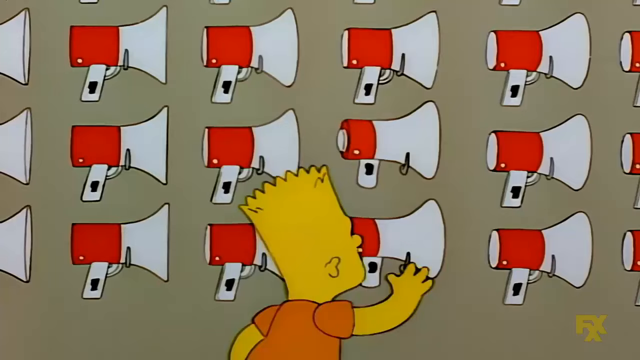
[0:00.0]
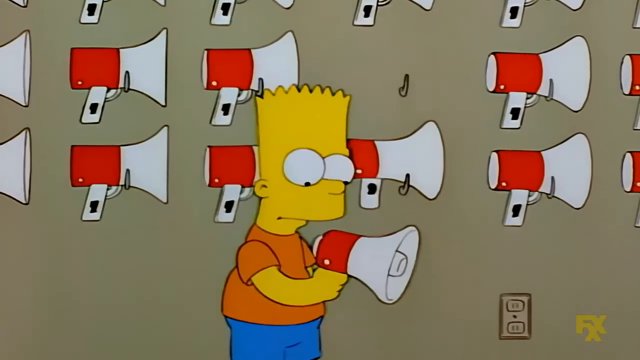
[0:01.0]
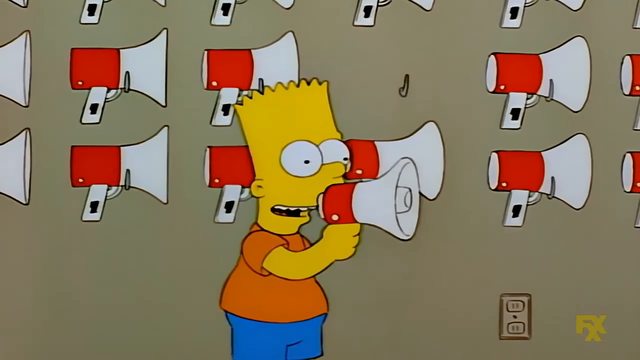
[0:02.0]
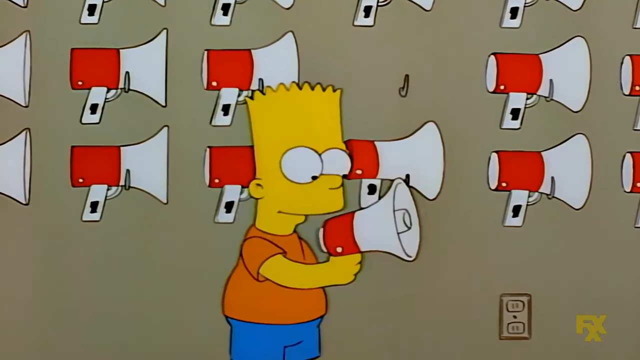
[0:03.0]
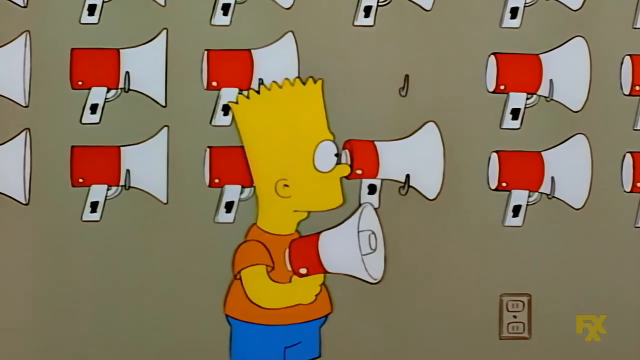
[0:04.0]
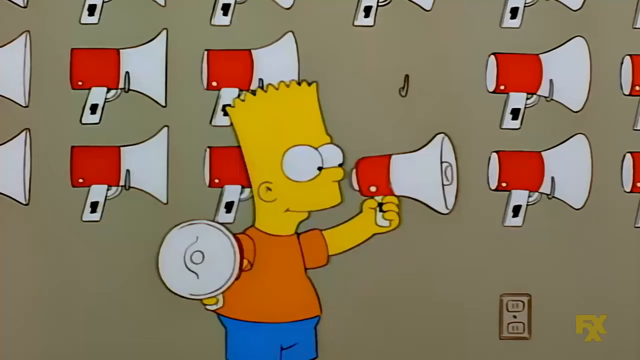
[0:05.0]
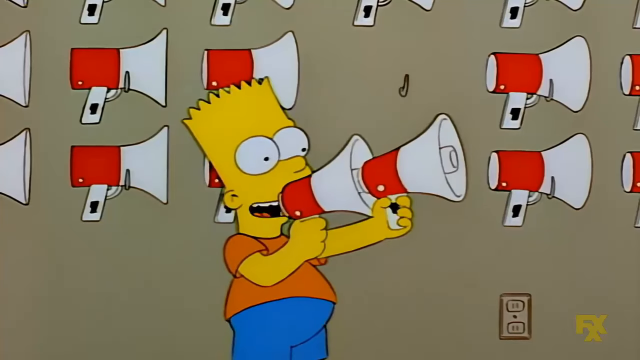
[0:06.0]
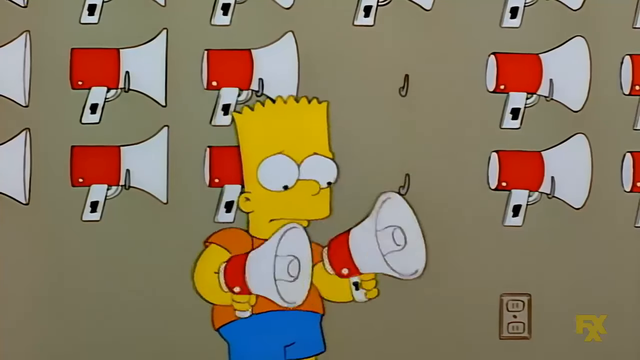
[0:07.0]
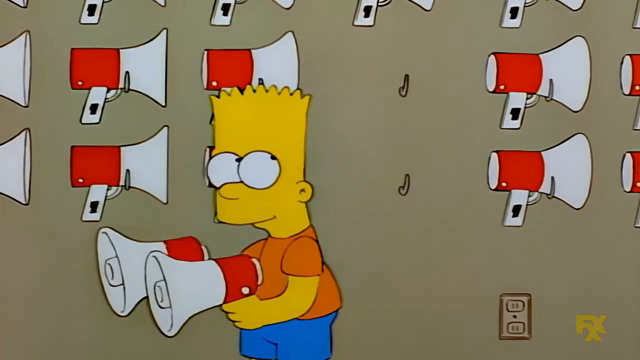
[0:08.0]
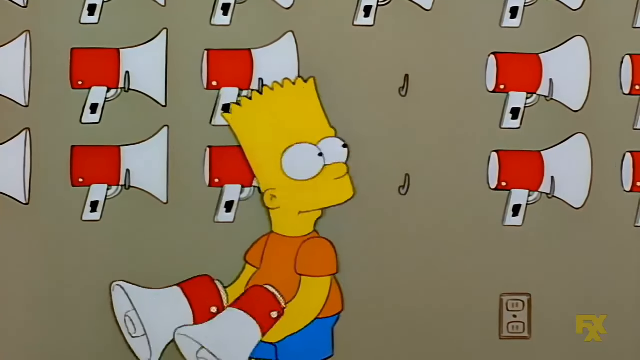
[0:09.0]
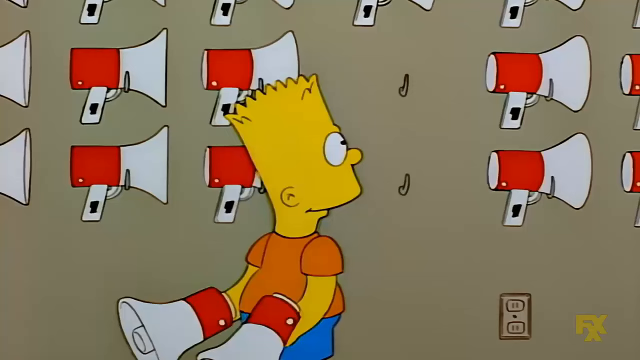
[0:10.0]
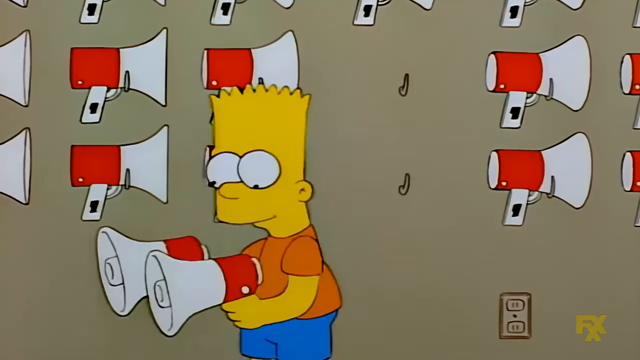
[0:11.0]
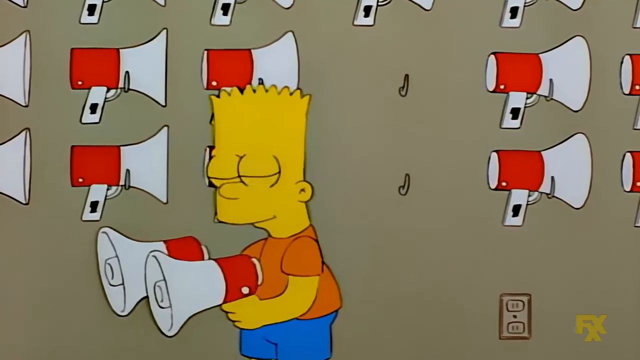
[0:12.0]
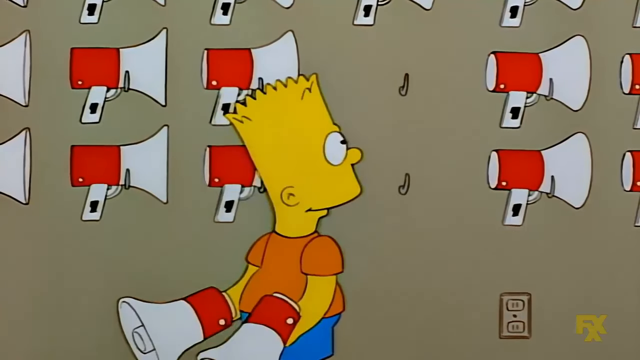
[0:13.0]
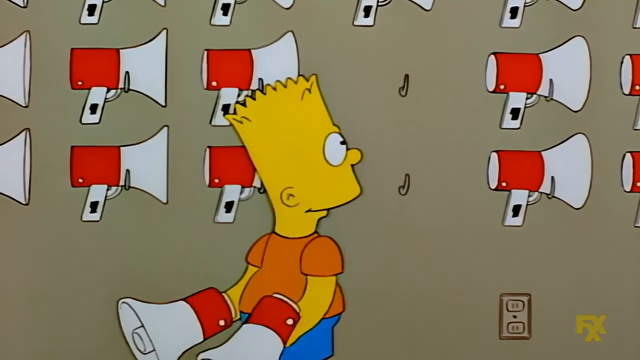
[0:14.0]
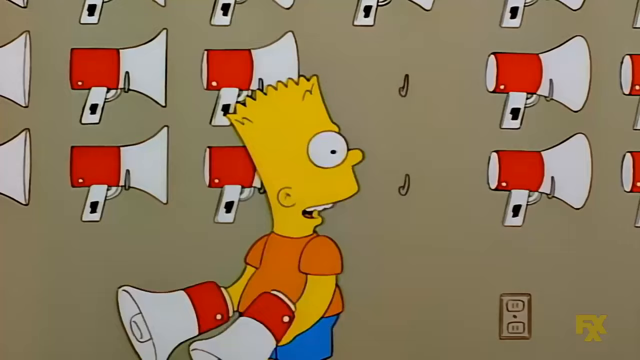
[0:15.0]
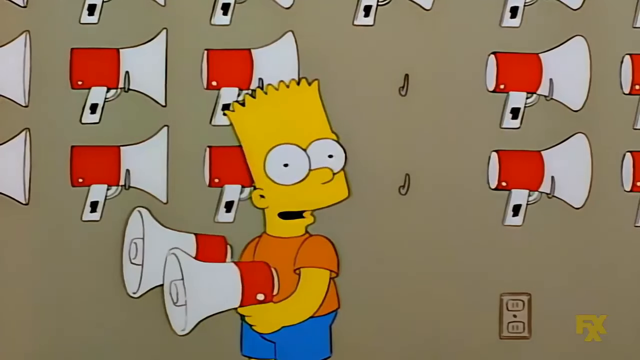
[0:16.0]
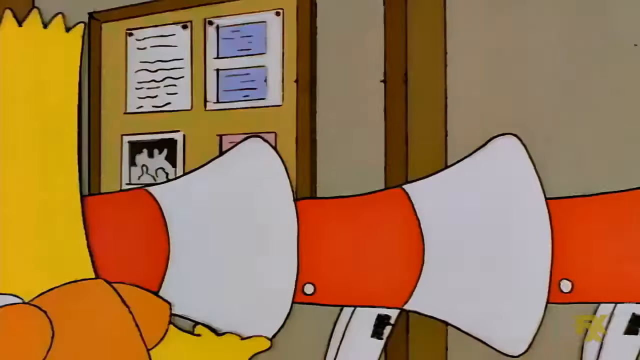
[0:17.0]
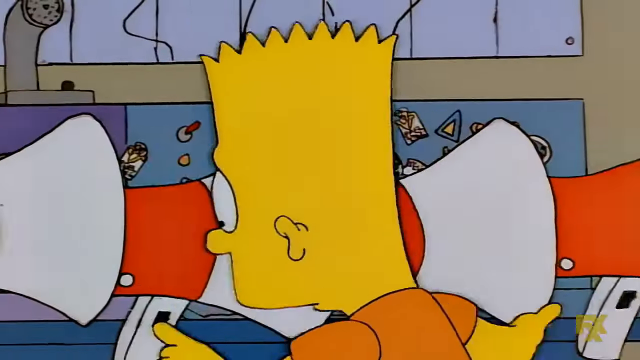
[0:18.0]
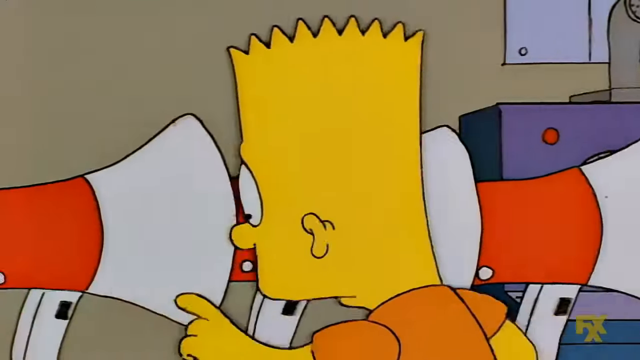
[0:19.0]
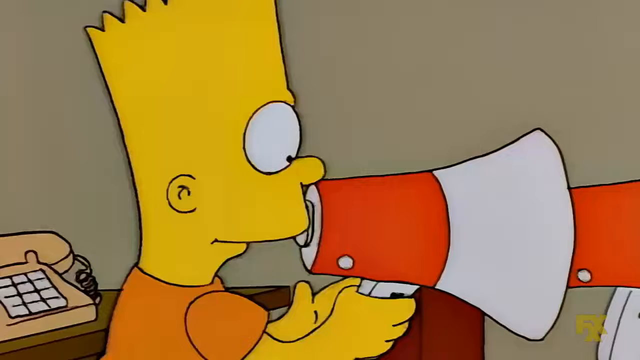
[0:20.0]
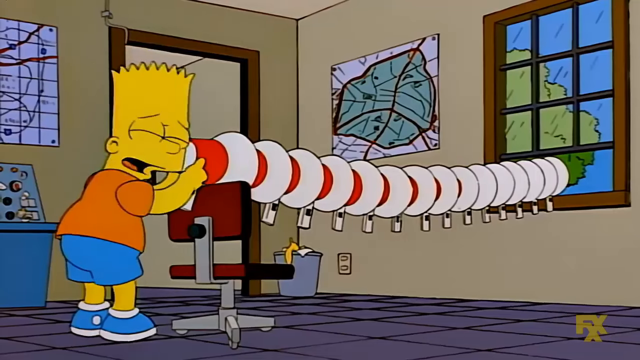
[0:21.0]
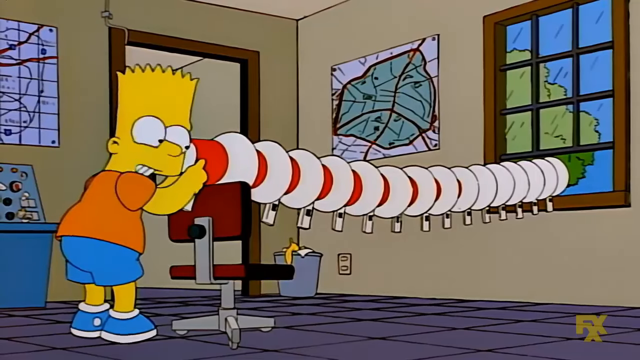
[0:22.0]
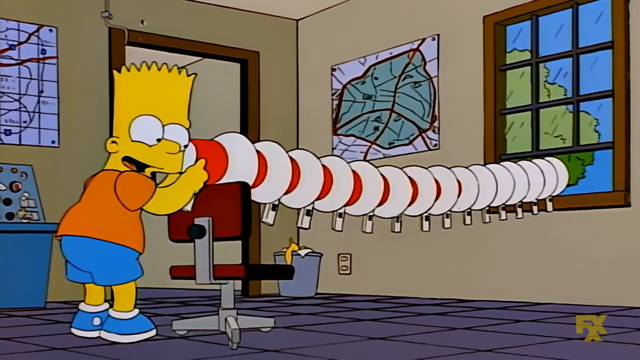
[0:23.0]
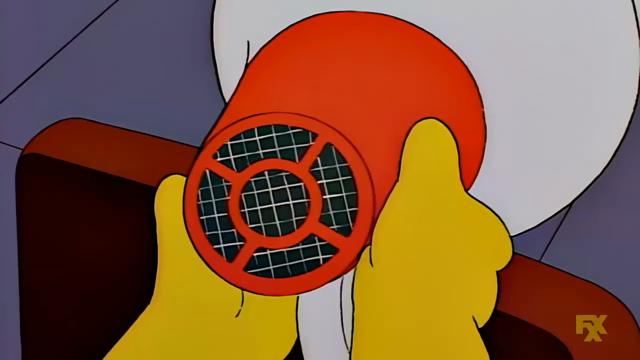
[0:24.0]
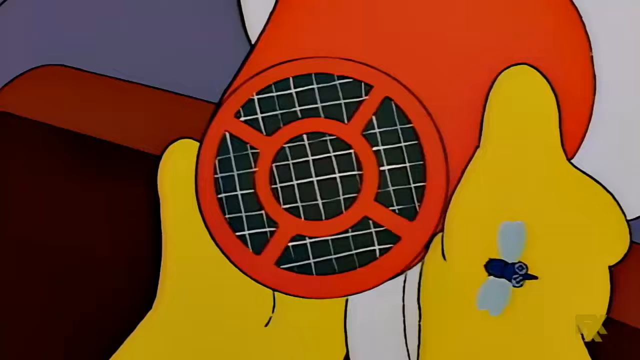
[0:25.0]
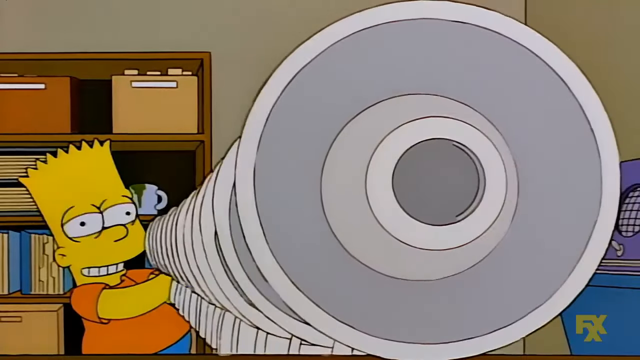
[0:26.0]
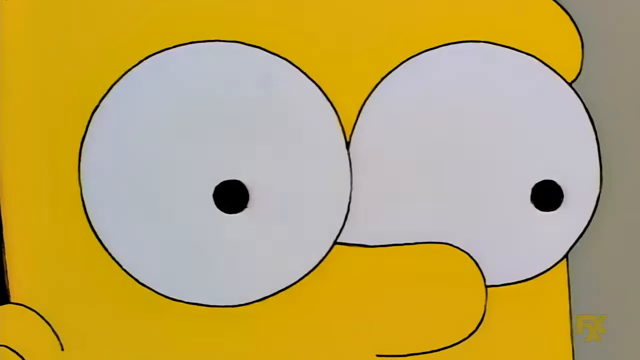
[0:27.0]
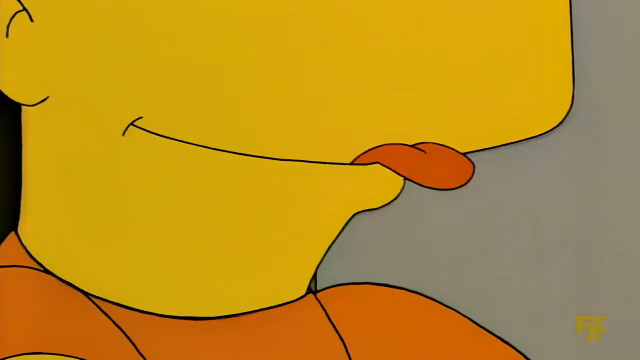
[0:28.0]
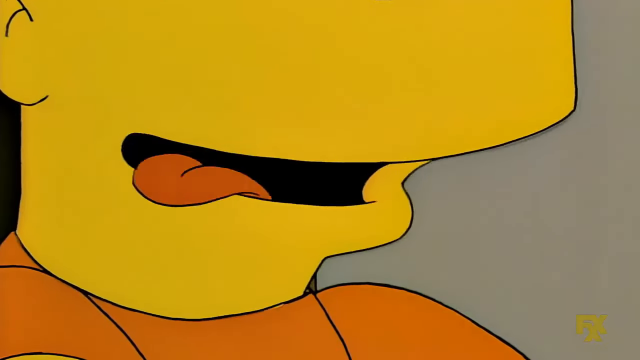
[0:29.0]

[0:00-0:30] This appears to be a clip from the Simpsons. Bart, a yellow boy in an orange t-shirt and jean shorts, is standing in front of a wall of megaphones. He seems to pull one of them down and talk into it, at least testing it. He takes two megaphones and puts them together, making a chain of megaphones. He keeps looking back at the wall and at the two megaphones in his hand, doing this a good five times as if he has a great idea. Then he makes a string of megaphones, ties them all together, and points it out the window. A fly flies by and buzzes, making the megaphones buzz. Bart licks his lips as if he is about to yell or say something into the megaphones, which number about 15 strung together, balanced on an office chair and out the window.